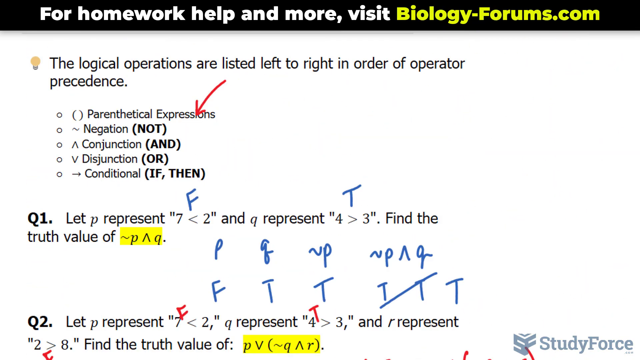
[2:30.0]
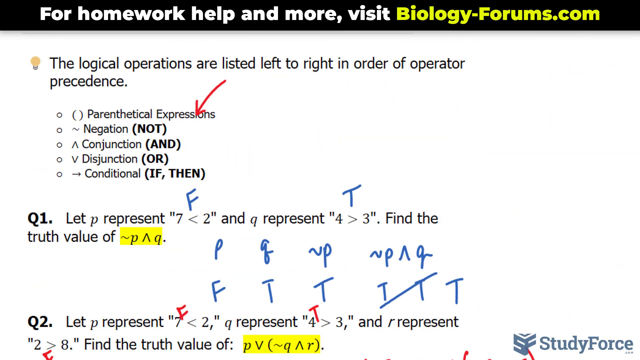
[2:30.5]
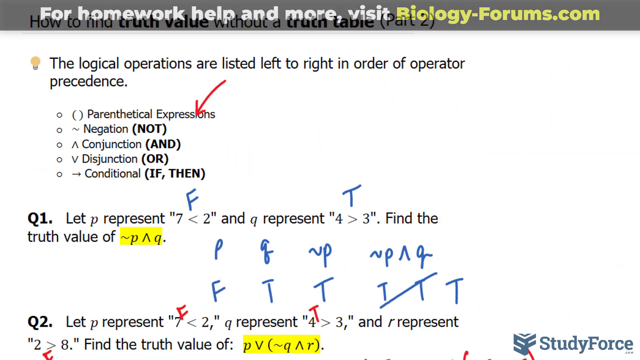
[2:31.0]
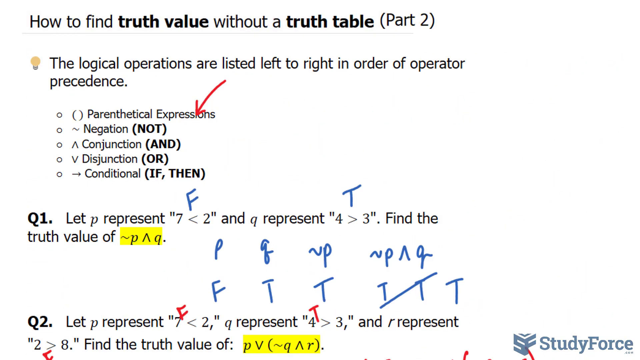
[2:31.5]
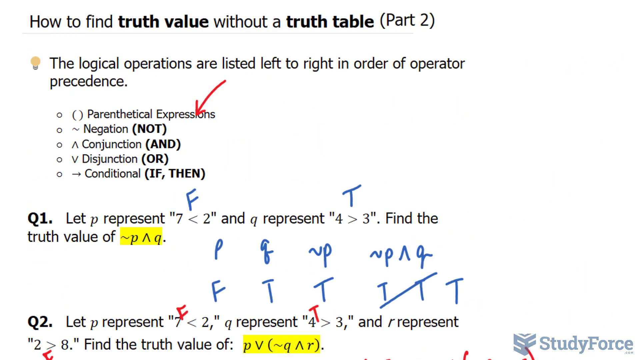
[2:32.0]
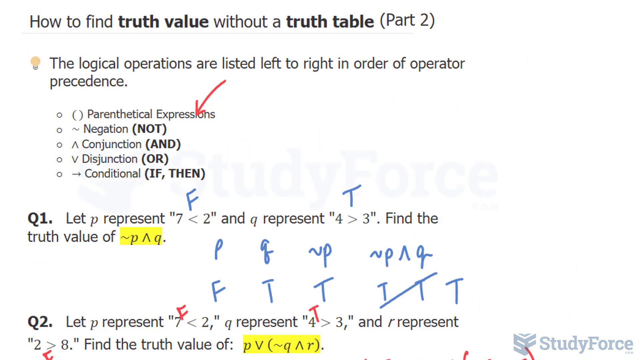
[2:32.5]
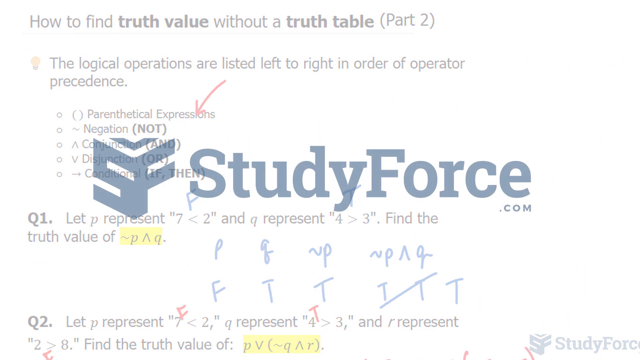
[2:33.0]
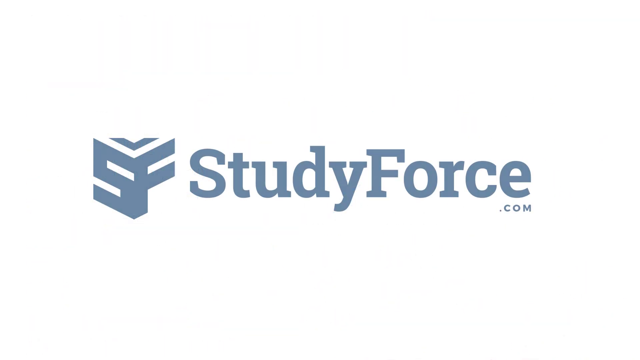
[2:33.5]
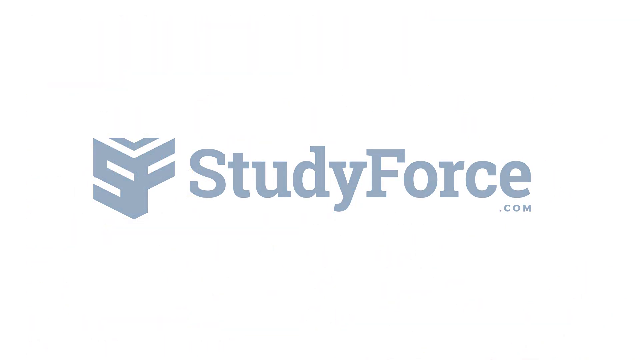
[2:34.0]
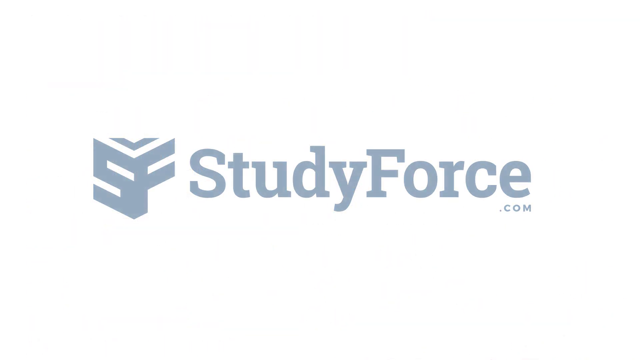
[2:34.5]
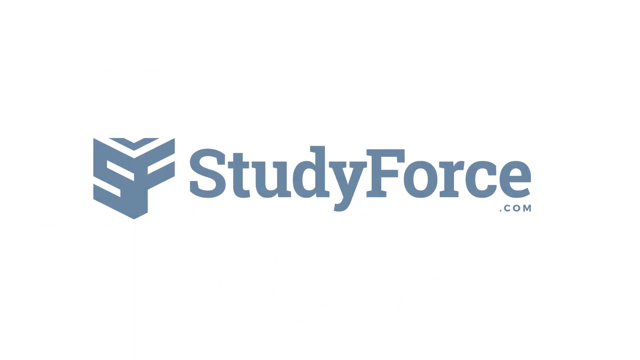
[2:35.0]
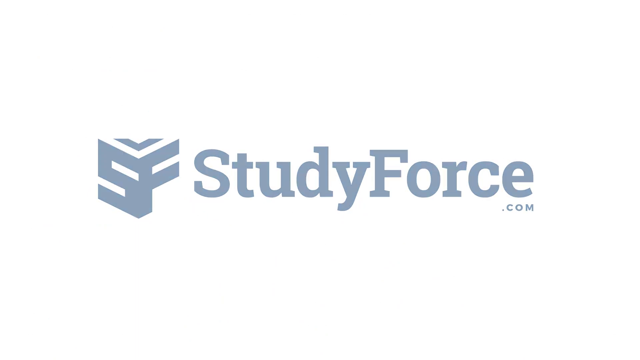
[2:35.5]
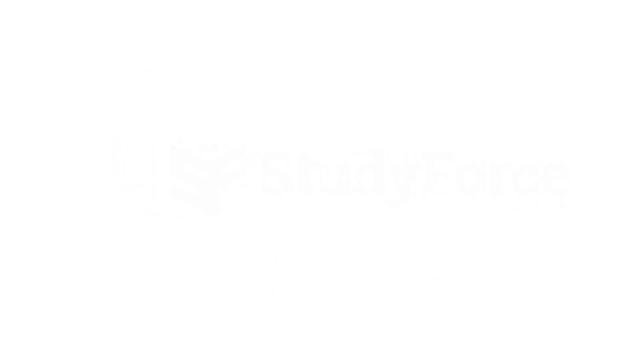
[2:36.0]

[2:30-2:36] An elongated rectangular black banner in the upper portion of the screen, containing a sentence with some words in white and others in yellow or very light green, dissolves away. After a few moments, the blue StudyForce logo appears with the word StudyForce next to it, together occupying the central part of the frame. Before disappearing completely, the logo and the word move slightly to the right.